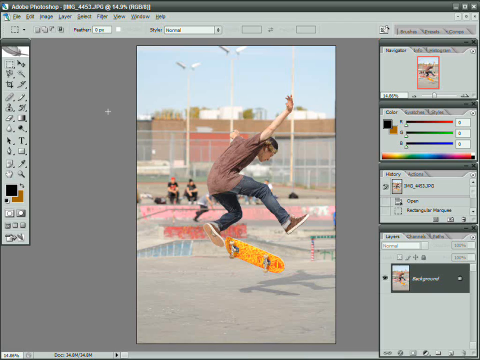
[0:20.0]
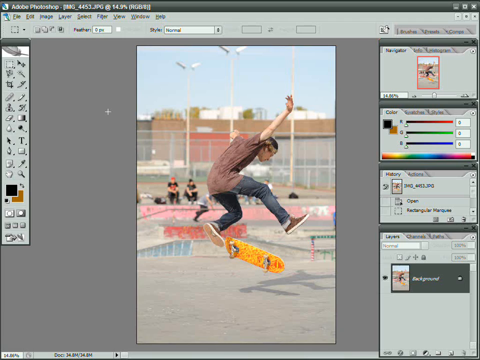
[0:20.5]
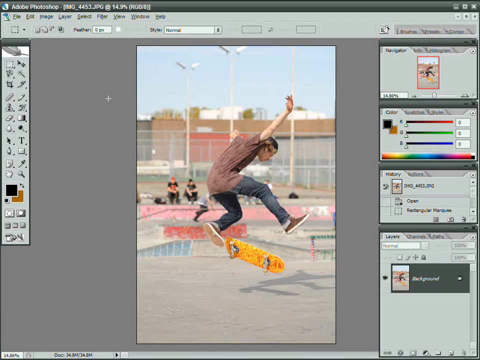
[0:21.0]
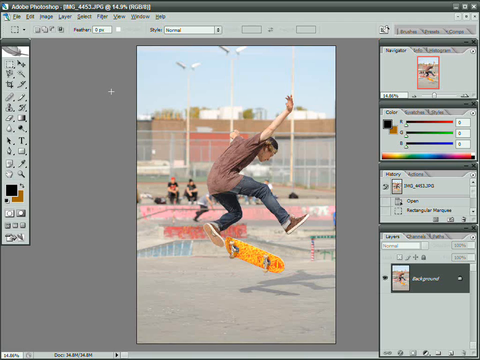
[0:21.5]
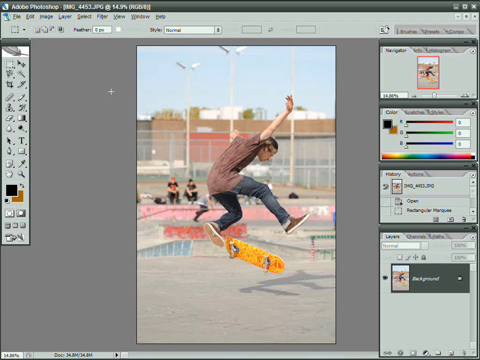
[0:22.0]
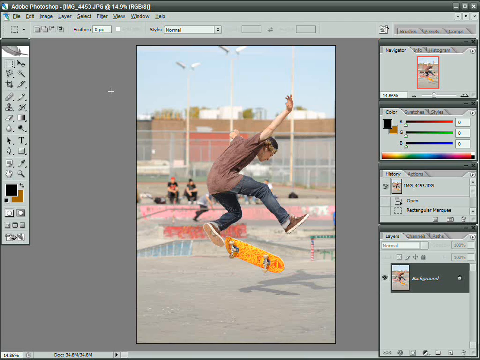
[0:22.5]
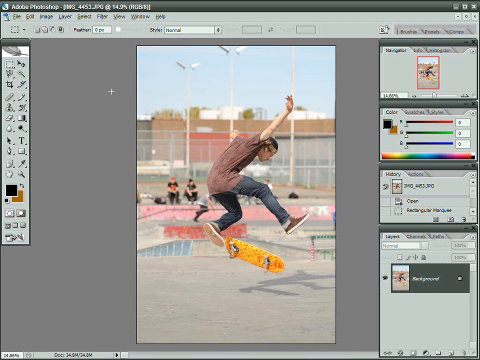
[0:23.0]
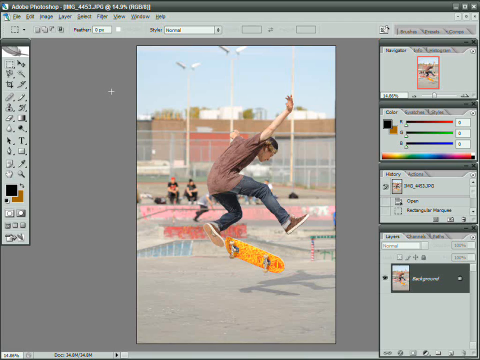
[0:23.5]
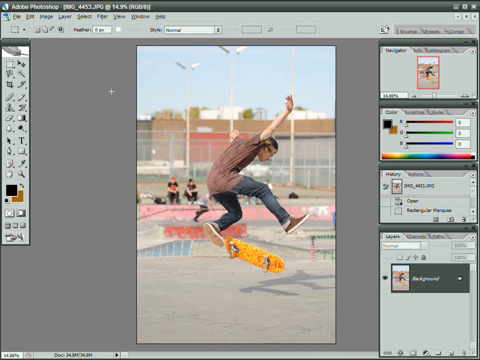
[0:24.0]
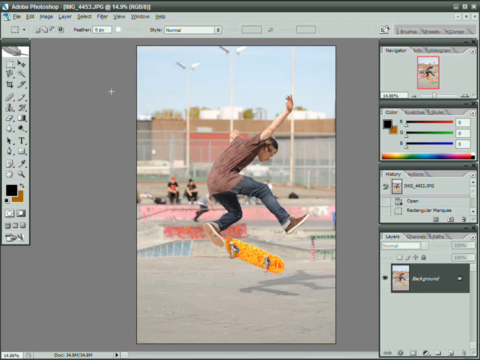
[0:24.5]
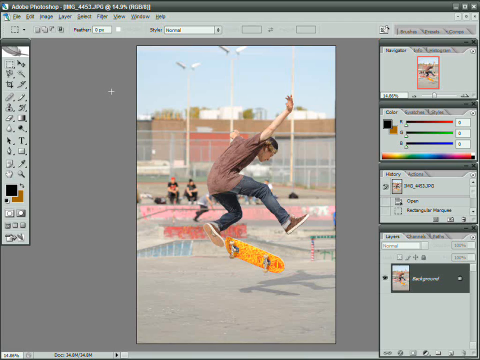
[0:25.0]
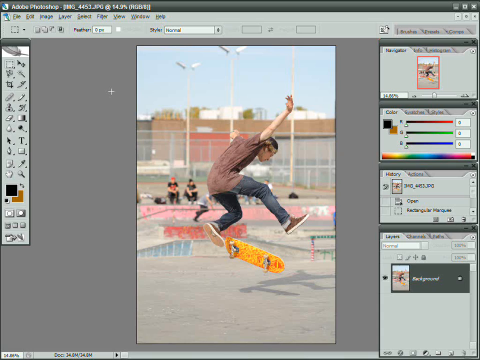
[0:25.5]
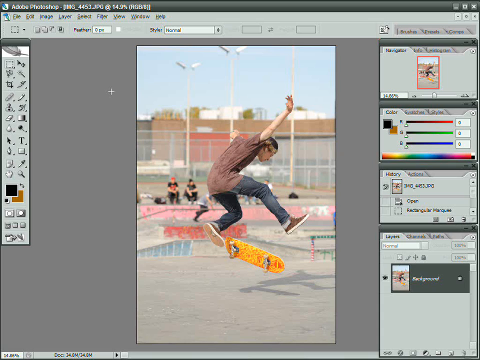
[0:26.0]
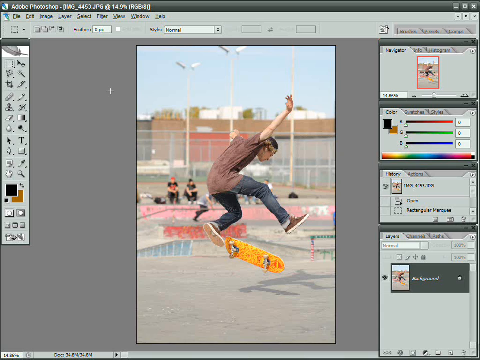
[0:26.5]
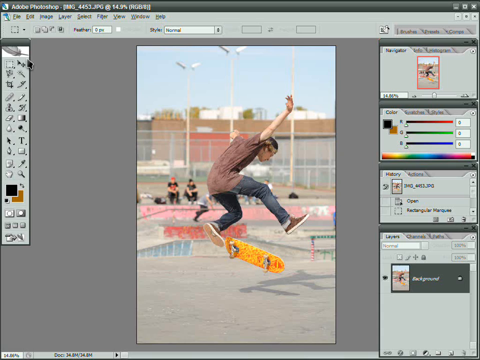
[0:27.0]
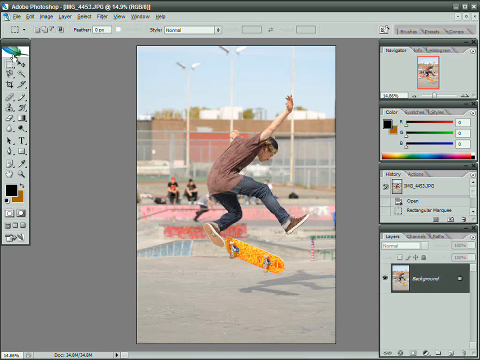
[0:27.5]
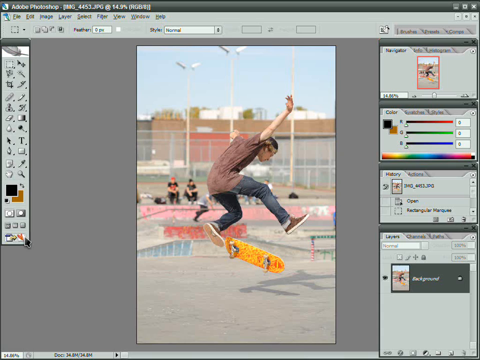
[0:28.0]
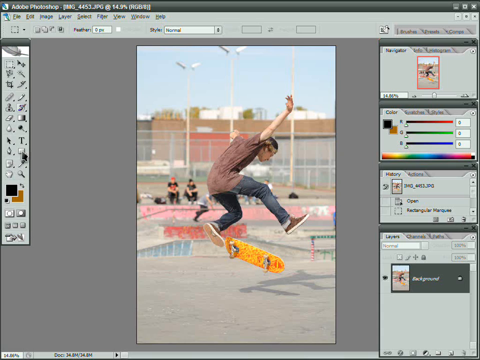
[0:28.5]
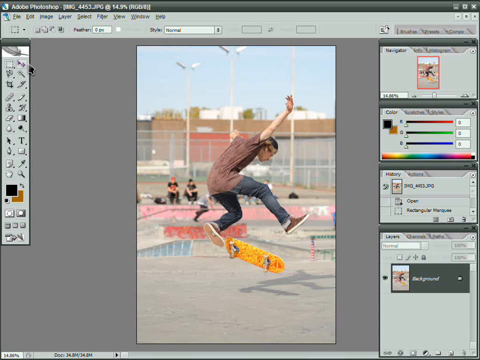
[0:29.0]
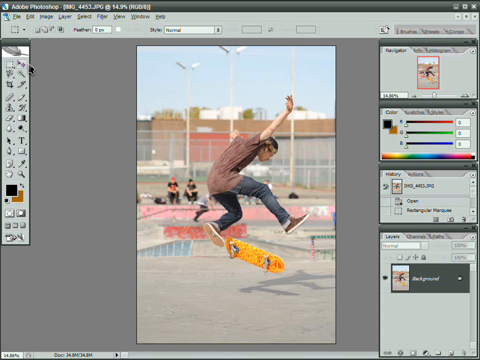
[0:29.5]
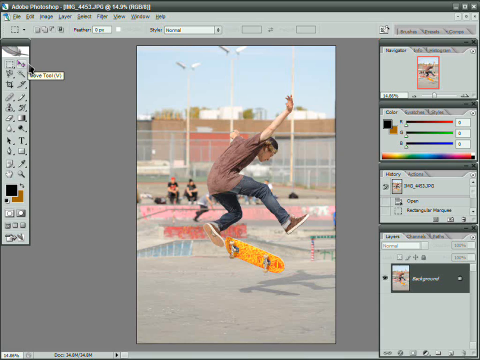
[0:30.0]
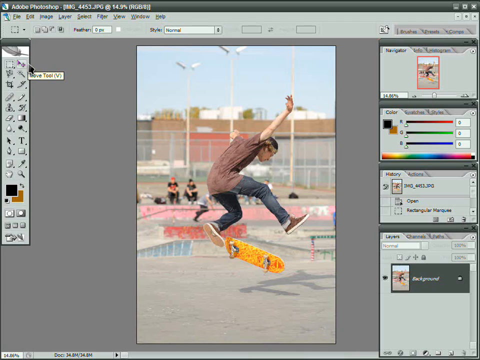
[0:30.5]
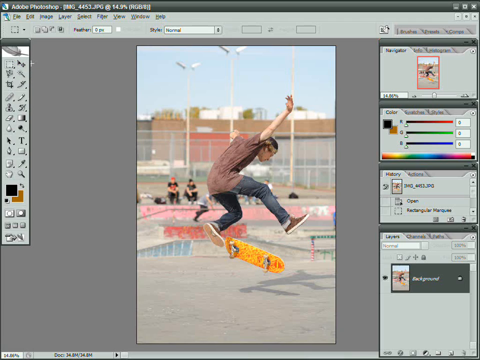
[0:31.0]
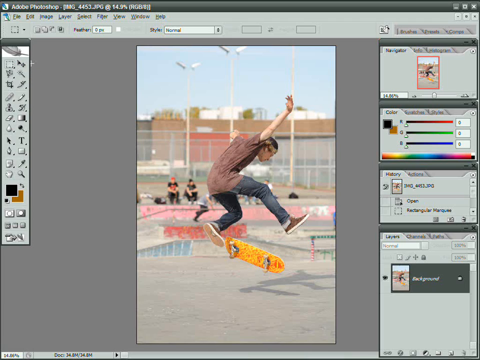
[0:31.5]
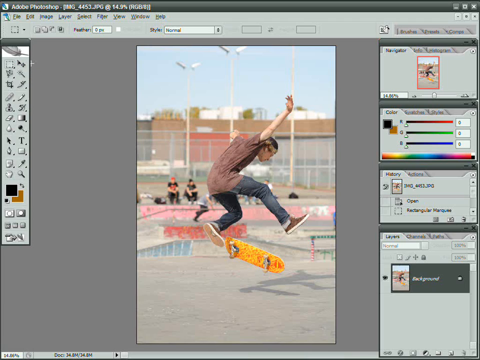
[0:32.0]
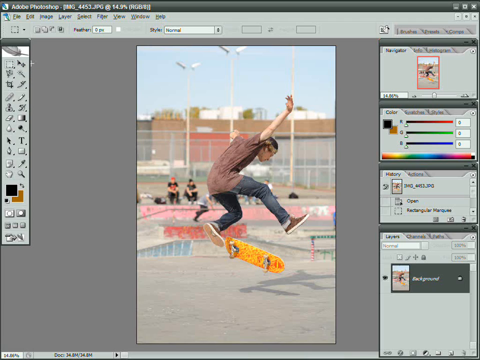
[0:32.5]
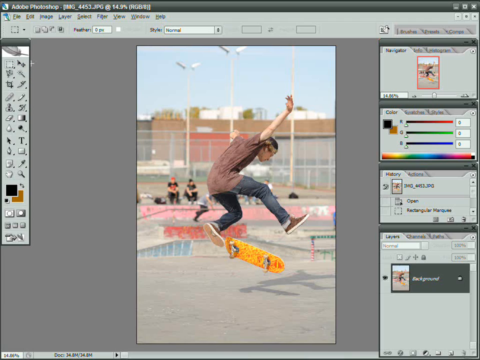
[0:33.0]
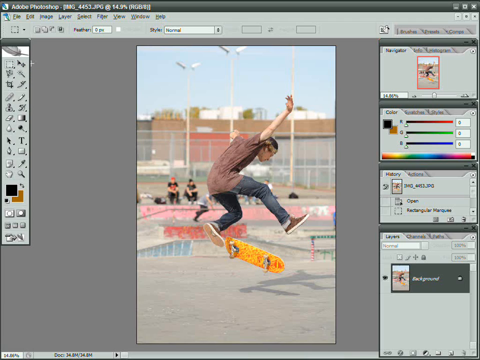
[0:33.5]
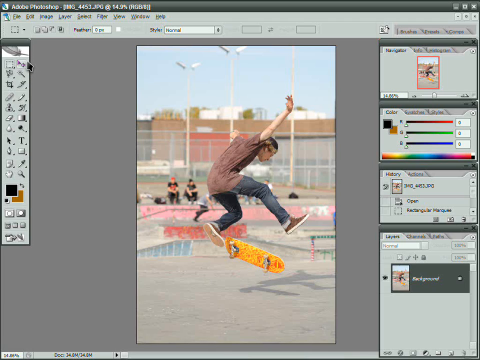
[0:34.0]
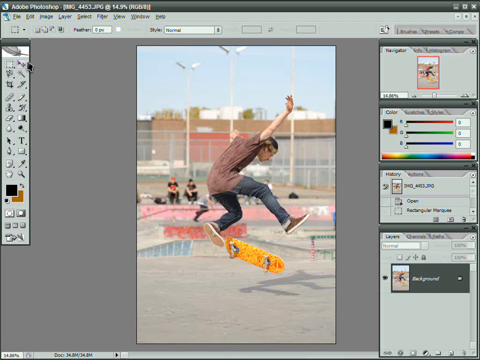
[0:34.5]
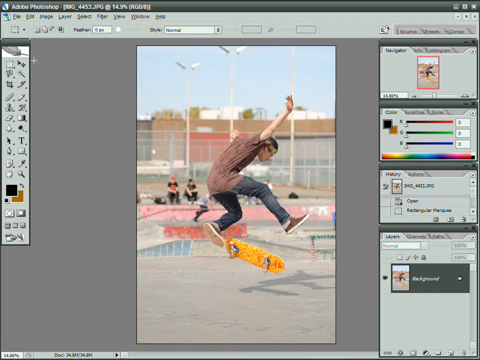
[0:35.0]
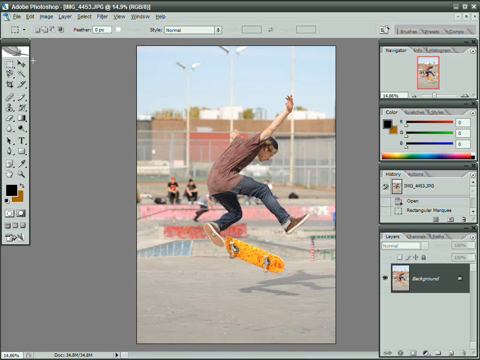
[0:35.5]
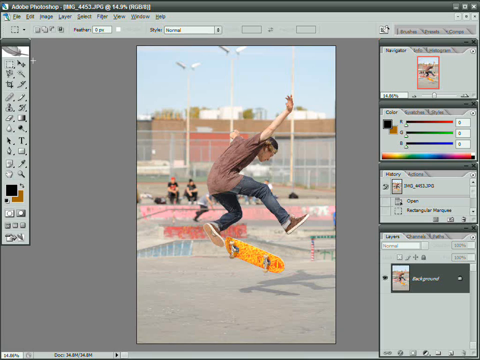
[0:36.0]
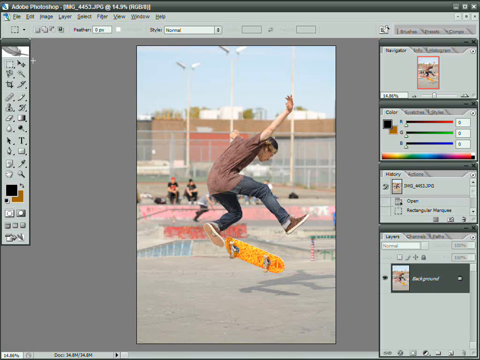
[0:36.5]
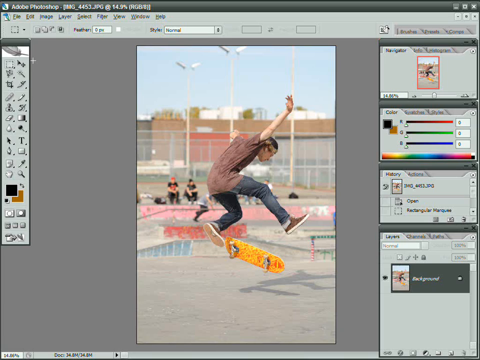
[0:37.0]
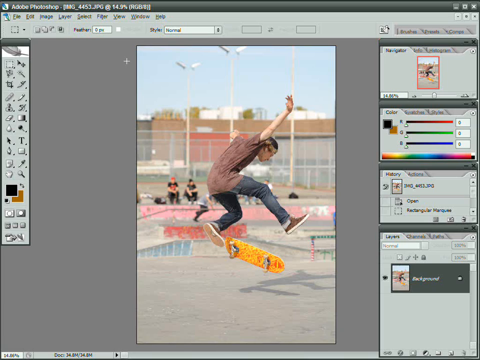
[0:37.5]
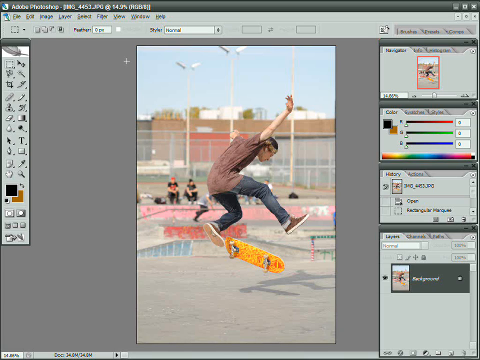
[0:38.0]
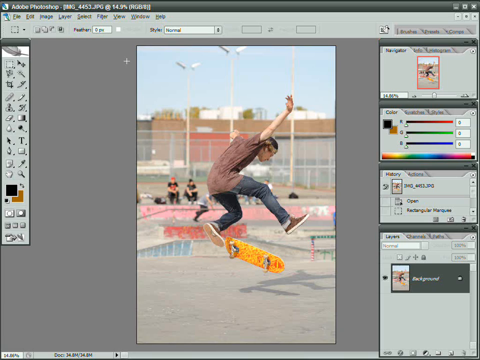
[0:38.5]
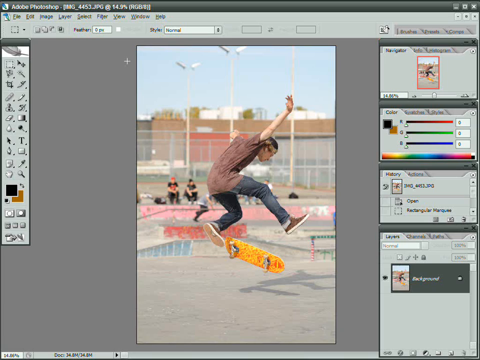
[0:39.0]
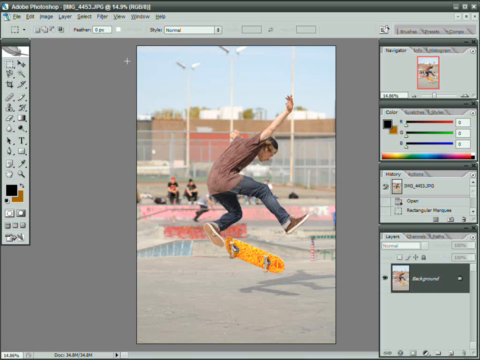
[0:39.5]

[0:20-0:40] A tool is used to recreate an image. Apparently a mouse pointer is being used to edit the image, which shows a boy on a skateboard in the air.